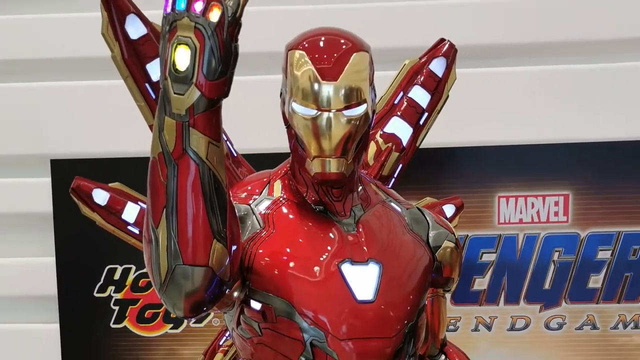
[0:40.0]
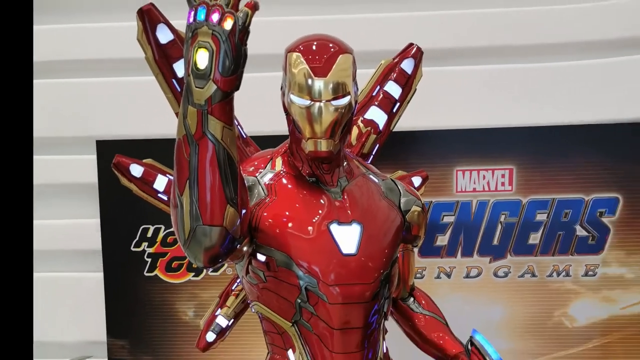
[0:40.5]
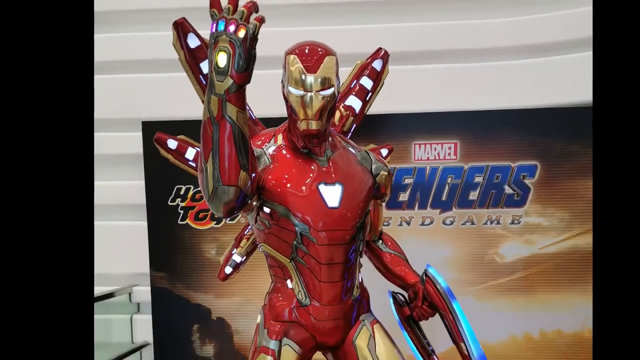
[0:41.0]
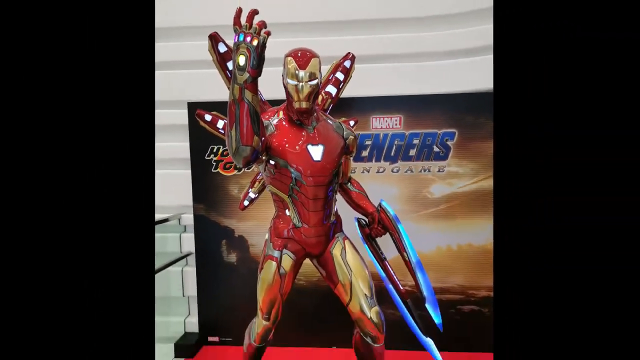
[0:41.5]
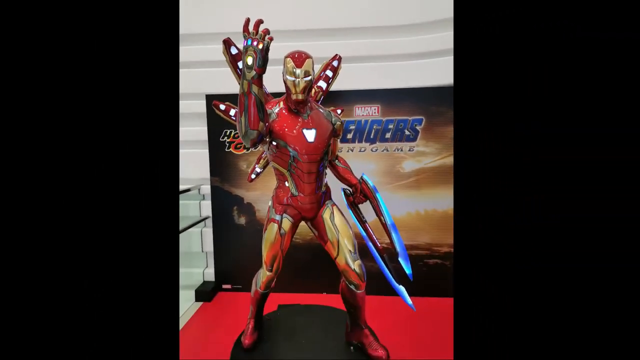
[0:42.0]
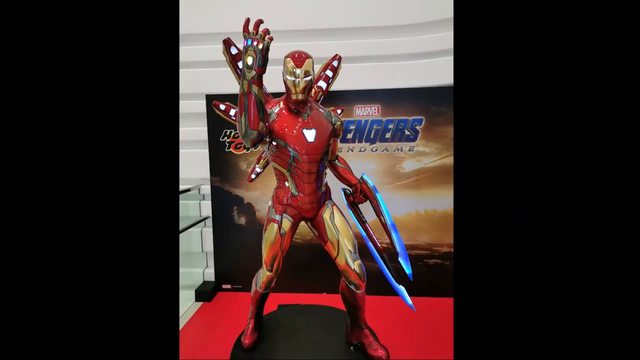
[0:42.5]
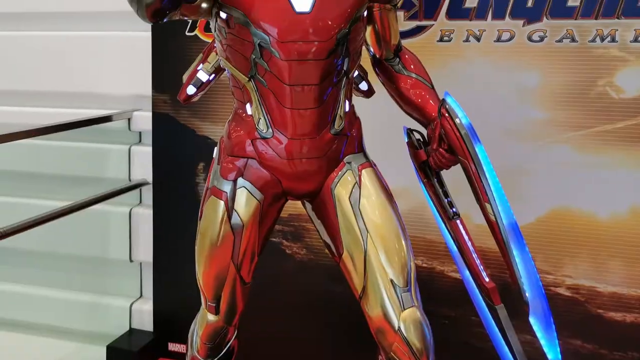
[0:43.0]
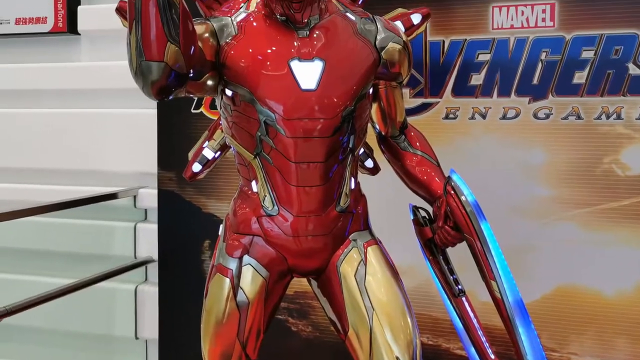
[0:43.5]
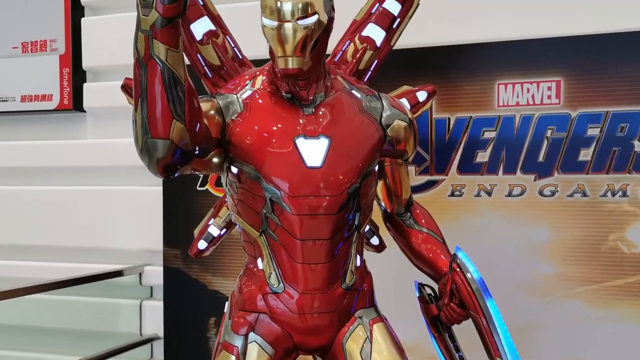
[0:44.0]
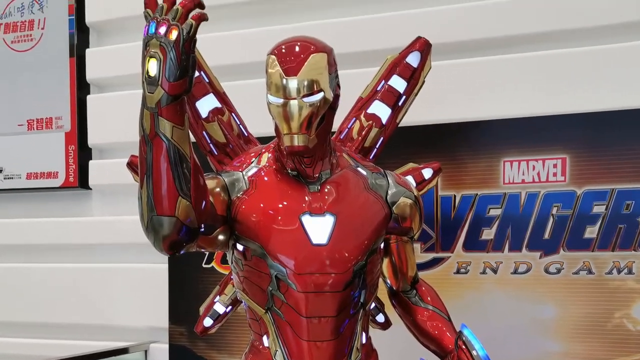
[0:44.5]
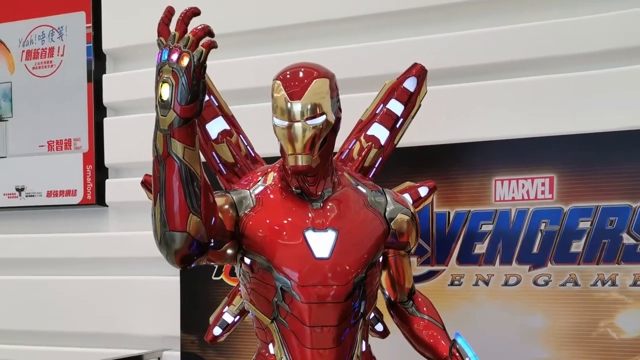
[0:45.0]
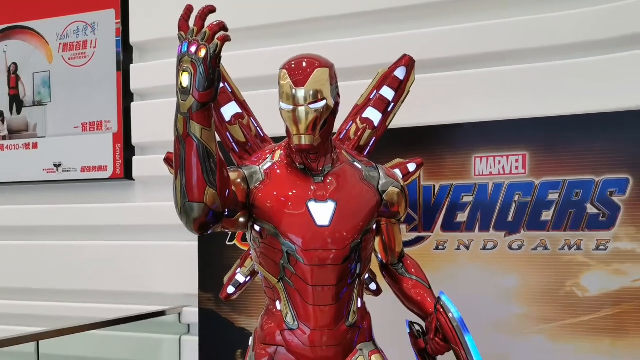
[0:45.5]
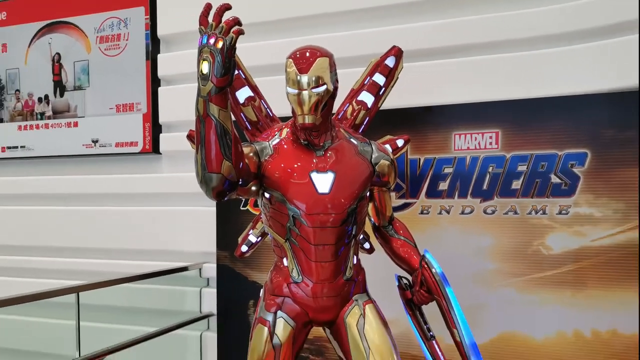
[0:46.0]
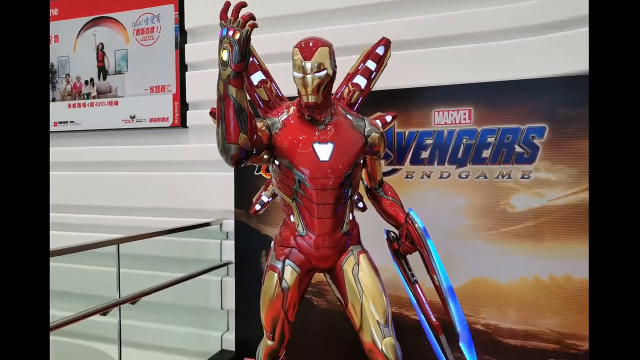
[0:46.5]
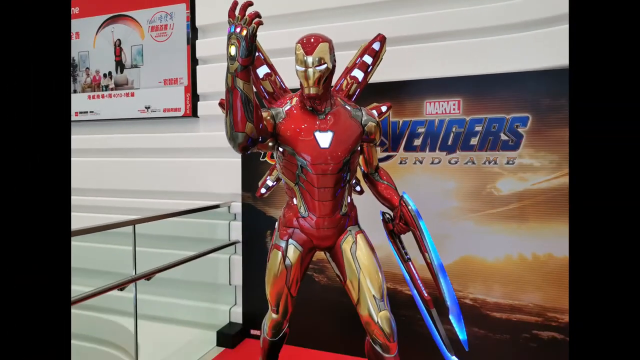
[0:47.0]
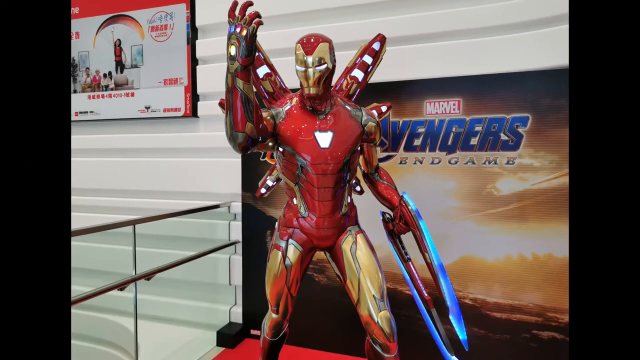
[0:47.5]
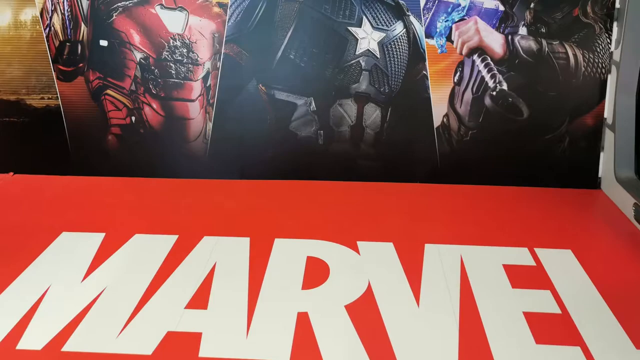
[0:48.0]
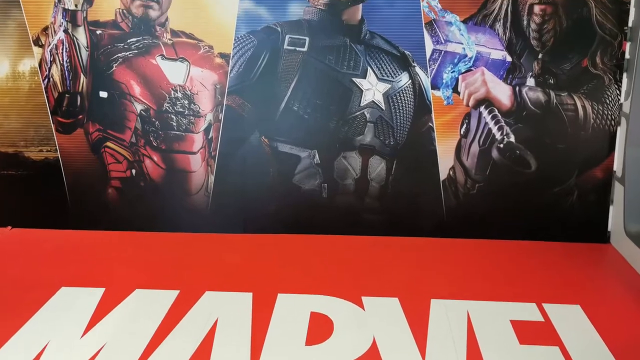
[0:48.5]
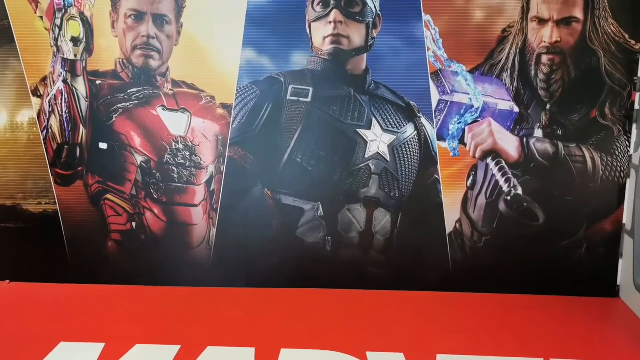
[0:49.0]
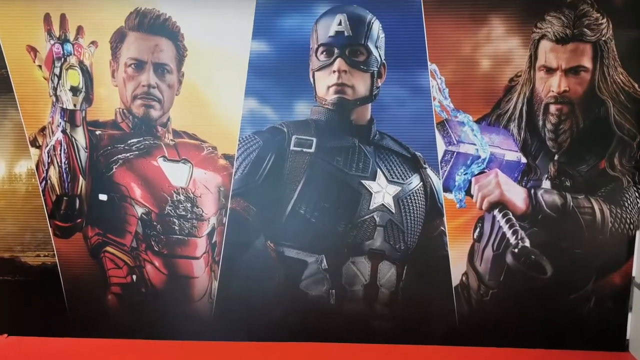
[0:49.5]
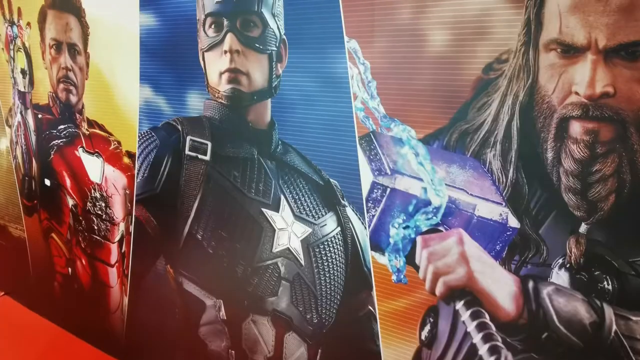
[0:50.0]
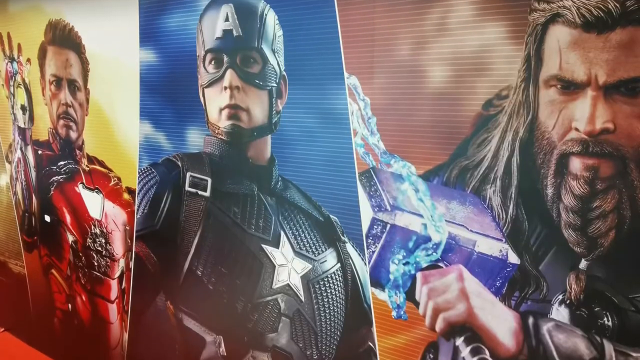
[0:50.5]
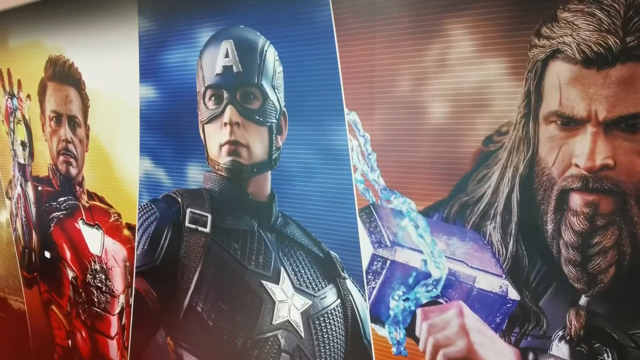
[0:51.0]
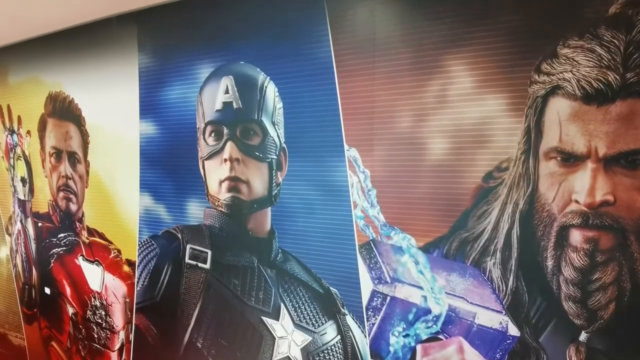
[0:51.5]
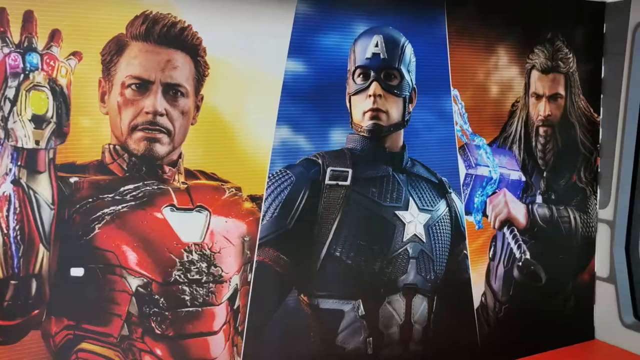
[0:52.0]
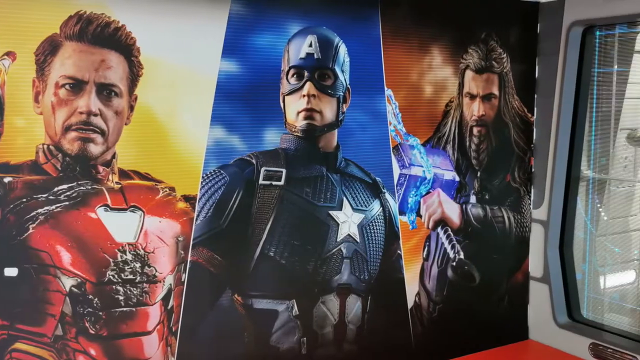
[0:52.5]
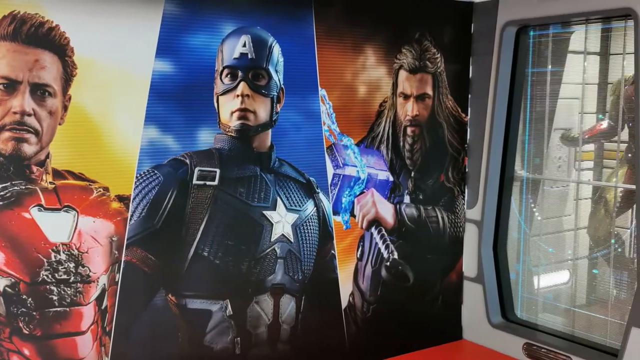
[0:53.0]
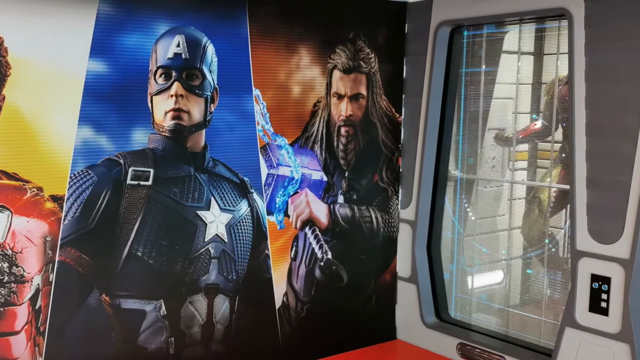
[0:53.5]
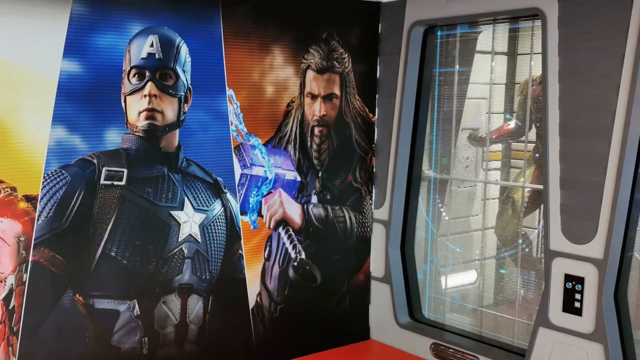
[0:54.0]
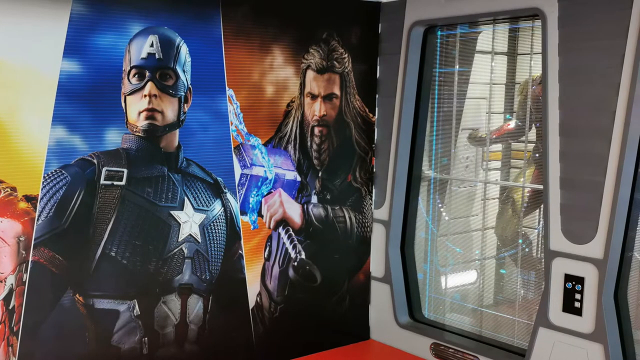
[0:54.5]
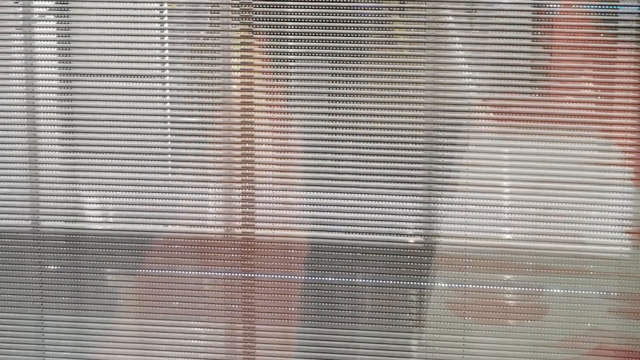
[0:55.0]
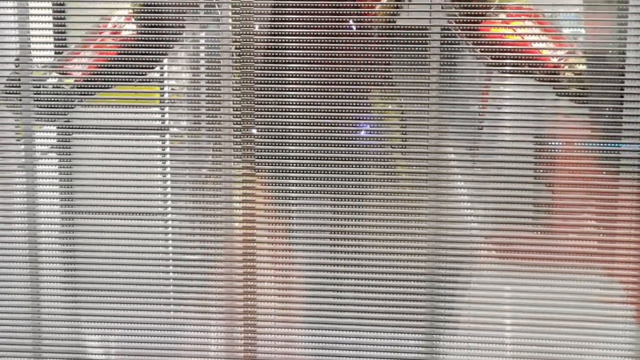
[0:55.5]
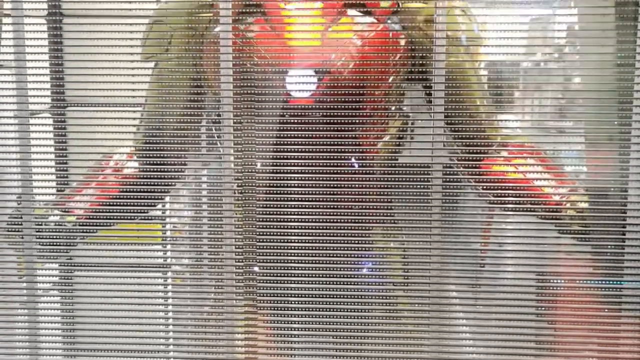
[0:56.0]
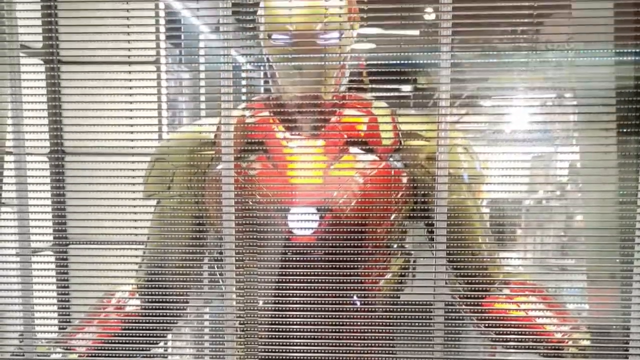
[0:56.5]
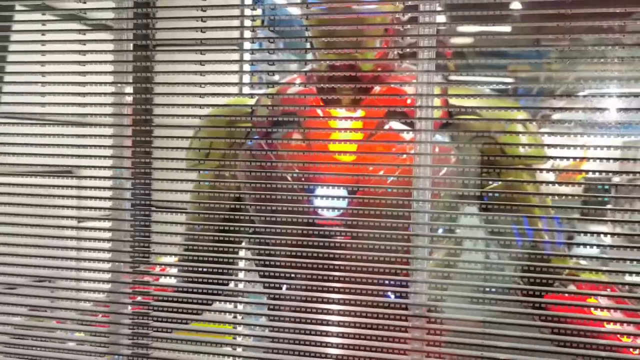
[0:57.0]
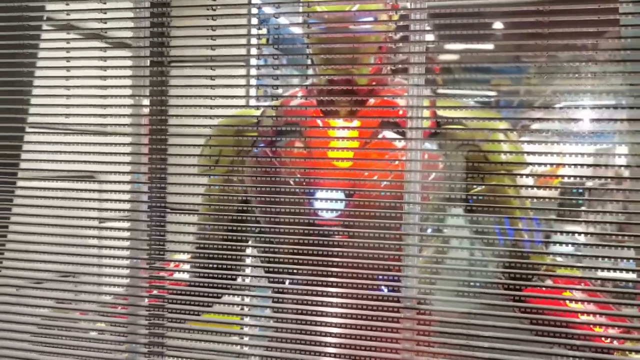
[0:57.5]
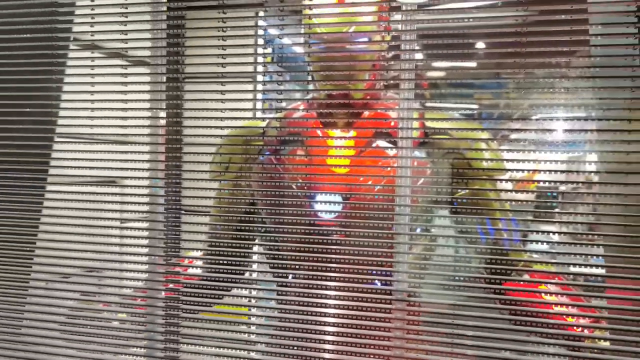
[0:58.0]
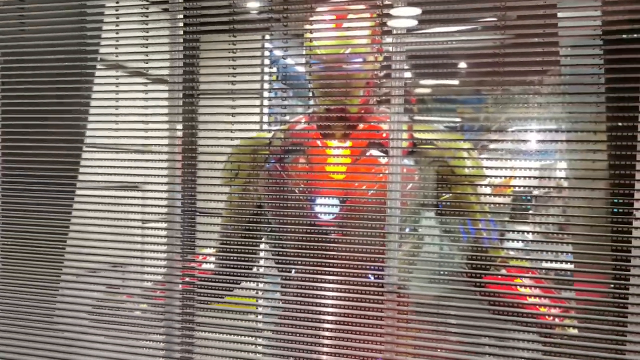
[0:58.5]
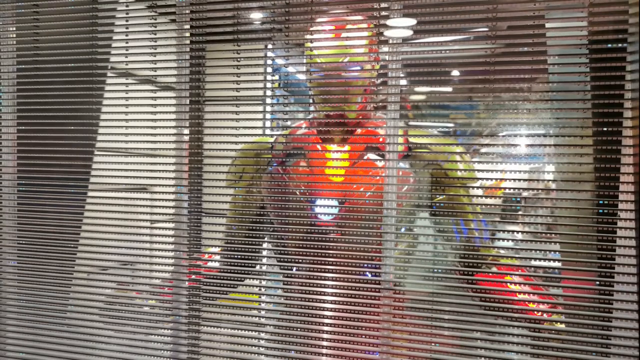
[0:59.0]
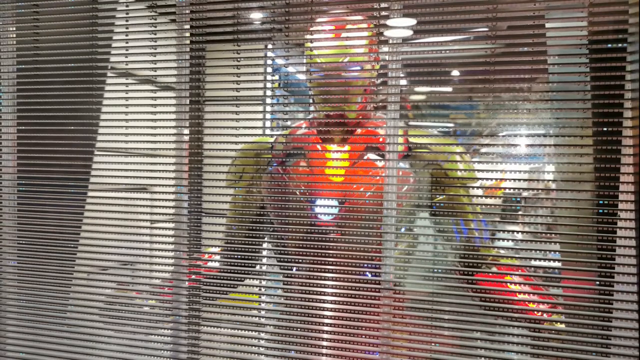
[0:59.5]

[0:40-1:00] The Iron Man statue and the Iron Man Infinity Gauntlet inside the glass case continue to be shown at what looks like the Avengers Endgame expo. To the side there seems to be a cage, which looks closed off, with another Iron Man suit and statue inside it. The Iron Man statue wears the suit from Avengers Endgame, has the Infinity Gauntlet on, and holds a weapon in hand. The Avengers Endgame background is shown, with some of the figures up close and in detail. Another Iron Man suit, different from the one on the statue displayed outside, is seen behind a door.